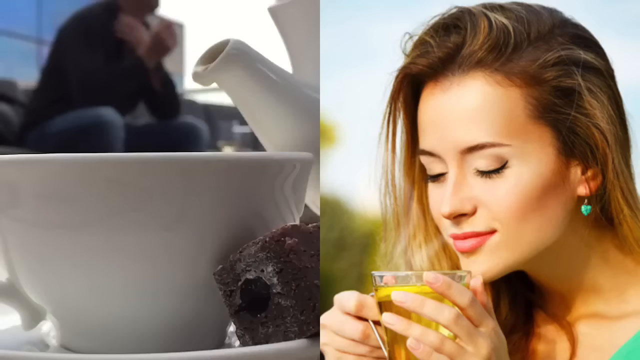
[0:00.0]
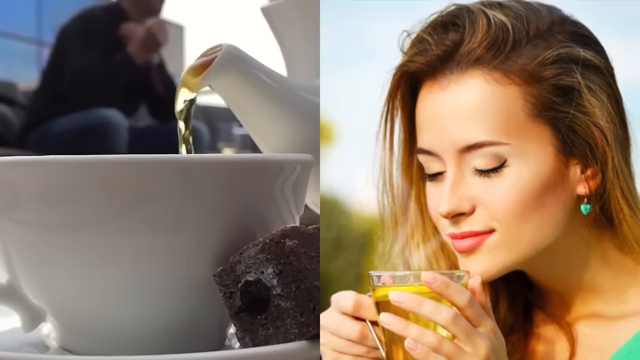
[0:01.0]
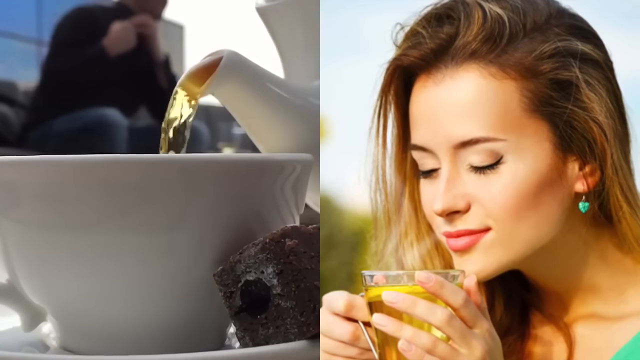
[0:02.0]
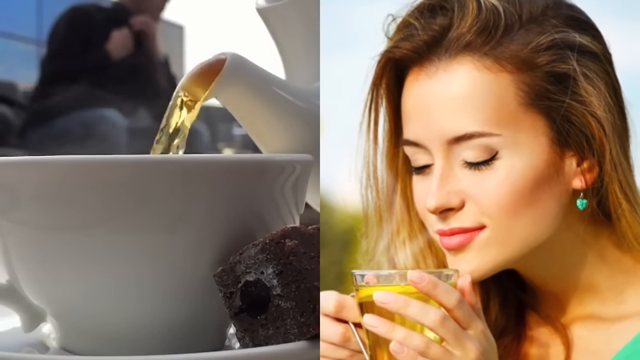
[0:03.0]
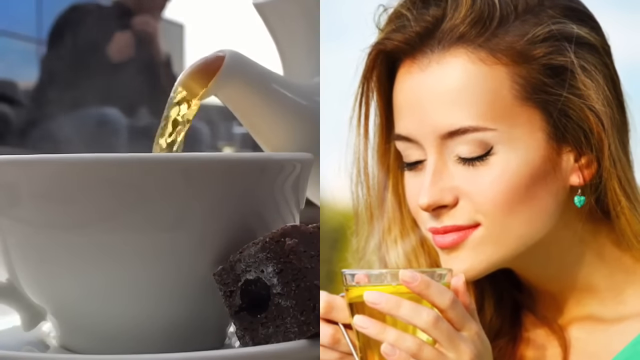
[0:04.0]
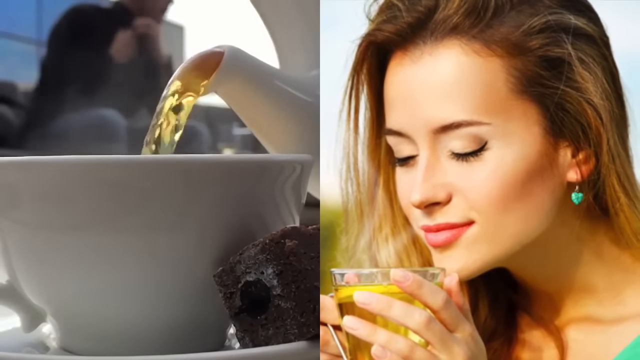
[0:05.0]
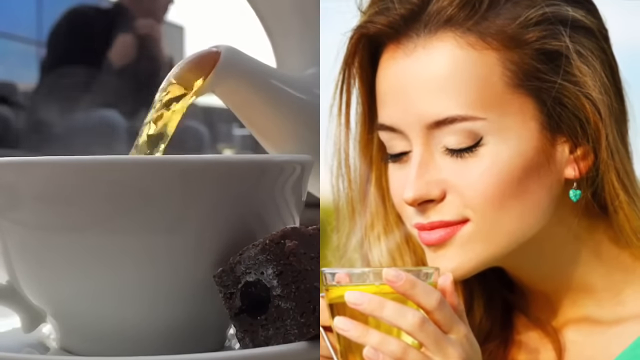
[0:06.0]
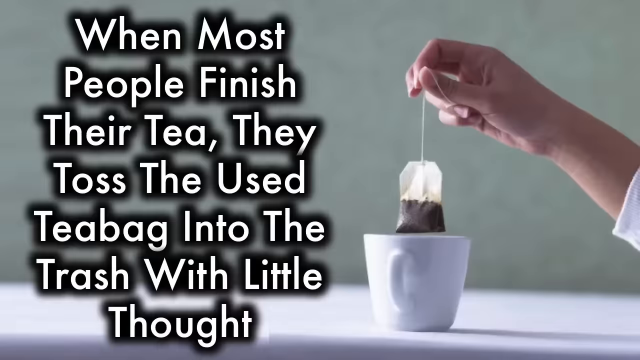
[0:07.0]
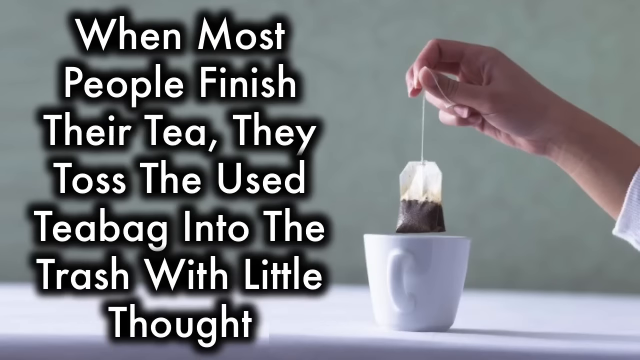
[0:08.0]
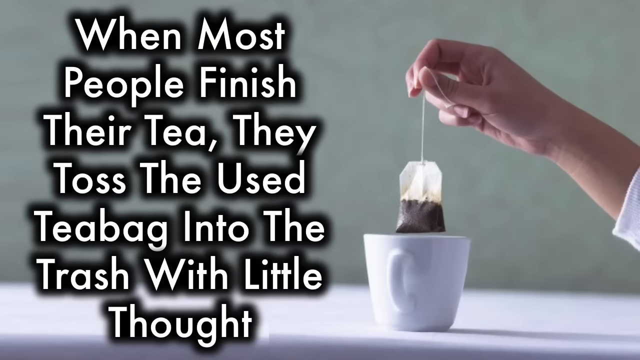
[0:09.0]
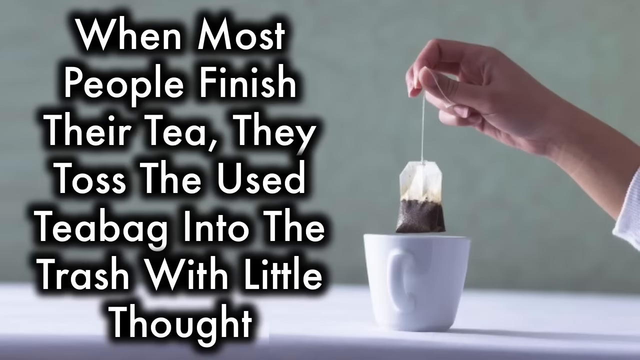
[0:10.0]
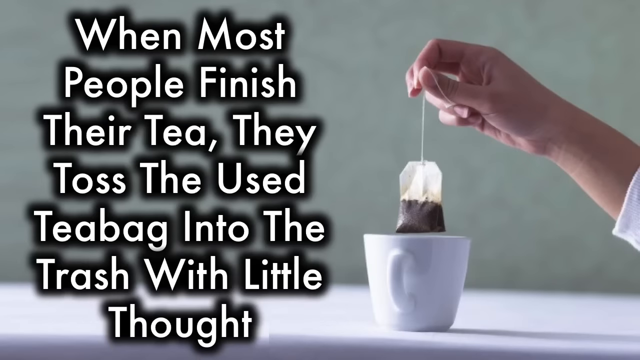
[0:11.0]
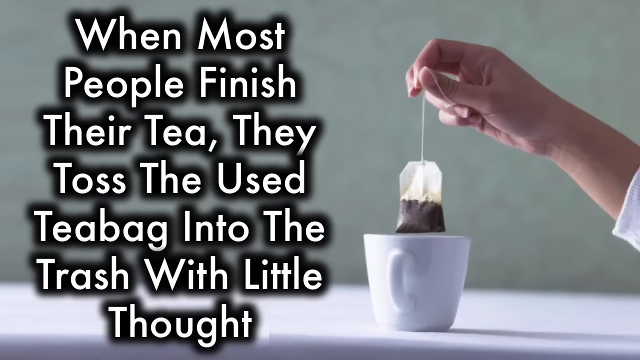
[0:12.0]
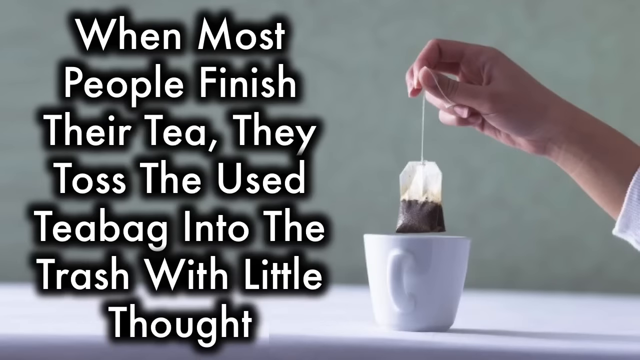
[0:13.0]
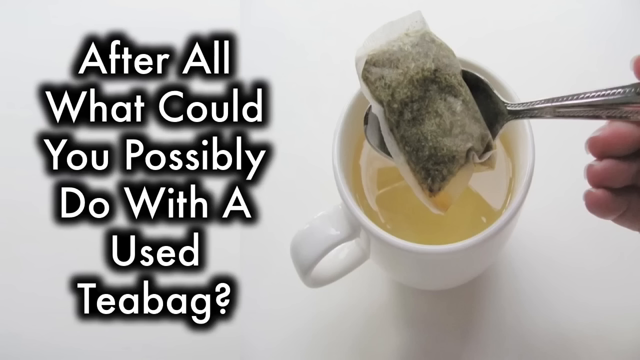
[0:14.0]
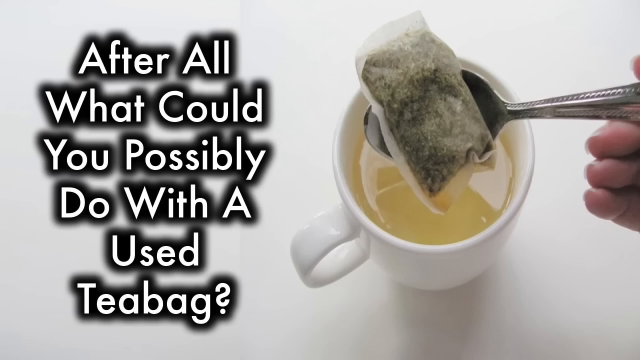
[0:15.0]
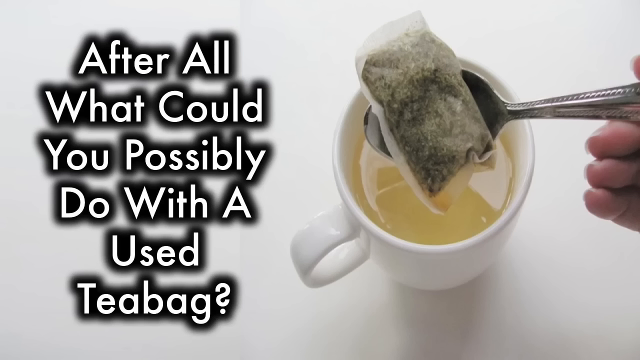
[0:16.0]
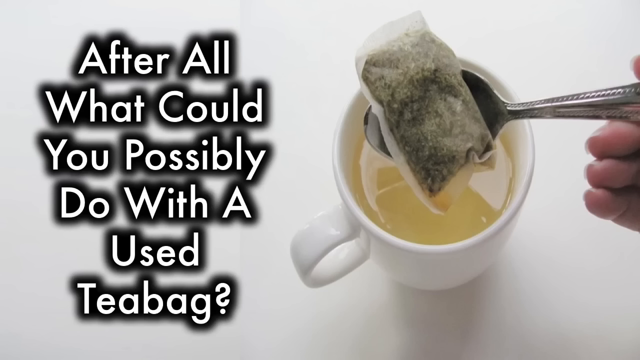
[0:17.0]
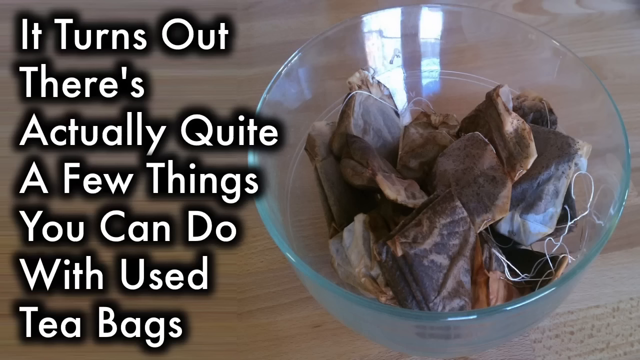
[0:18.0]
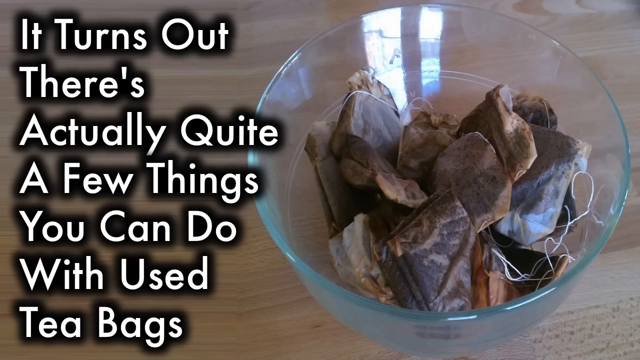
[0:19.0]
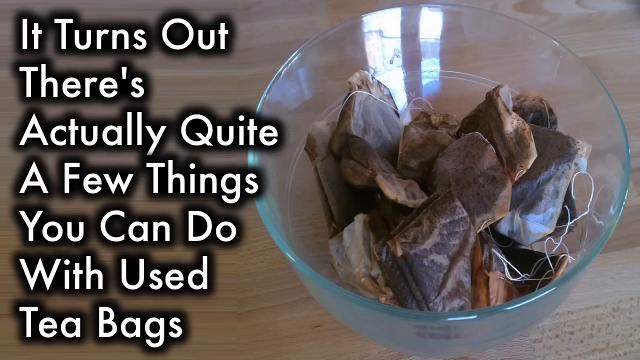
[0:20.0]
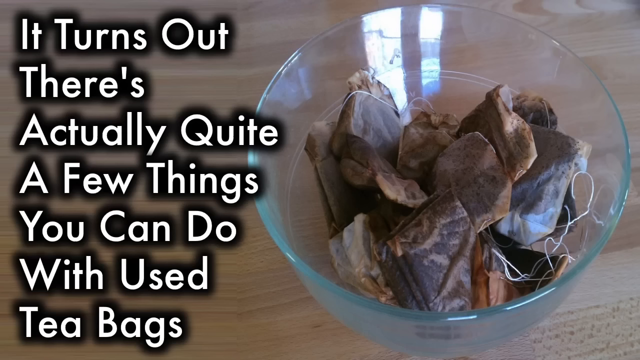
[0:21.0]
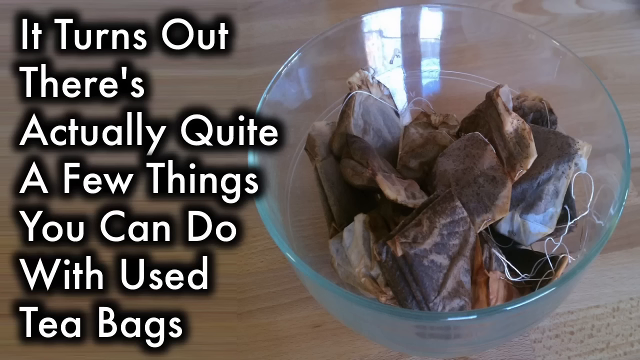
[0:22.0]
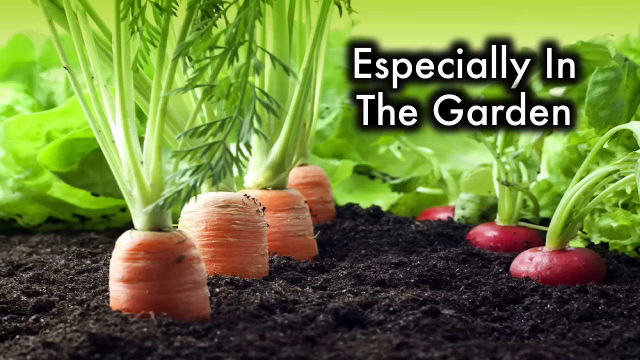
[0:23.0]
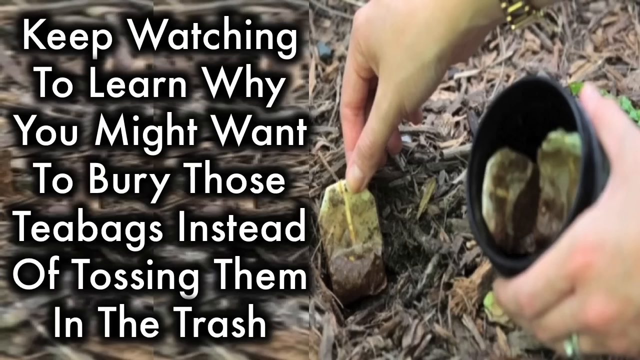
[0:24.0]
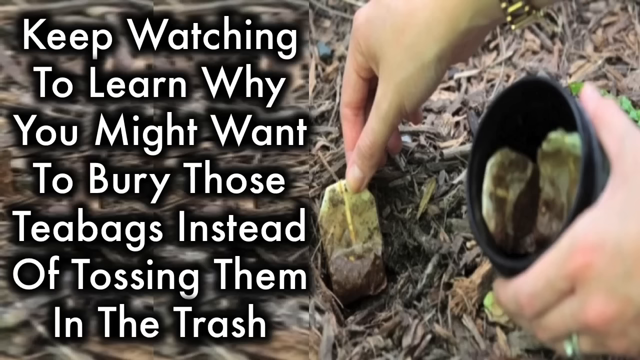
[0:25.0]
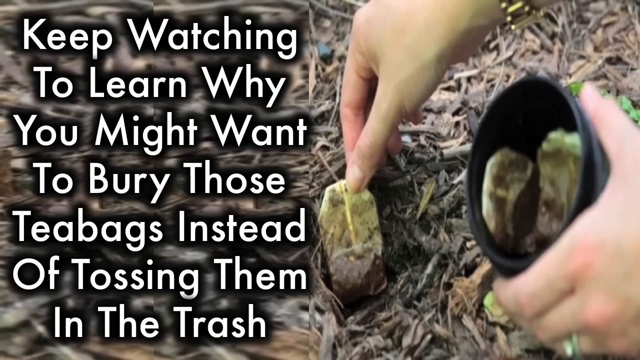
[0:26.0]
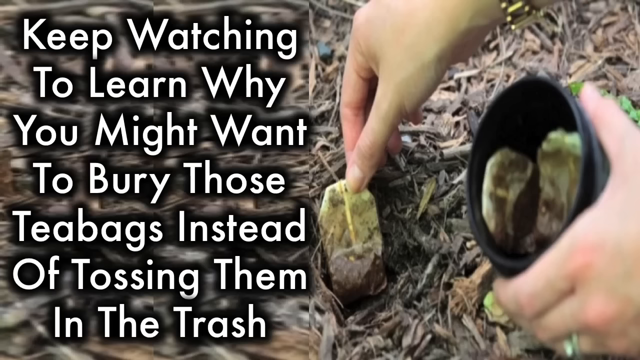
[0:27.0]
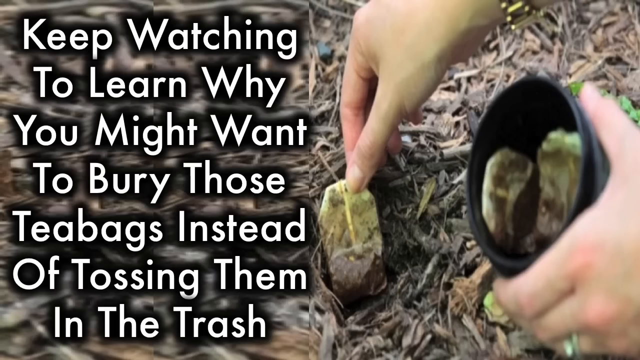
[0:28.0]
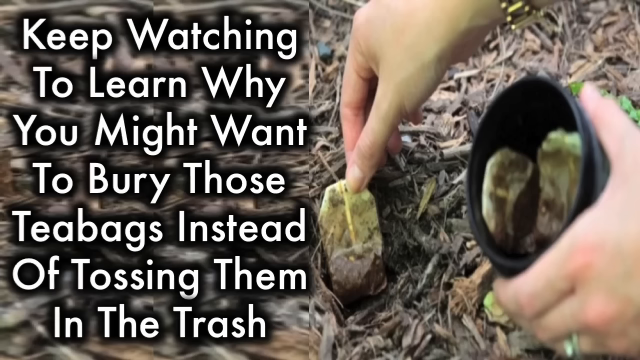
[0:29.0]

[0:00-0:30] A woman with a green earring and a green shirt holds a cup of what appears to be tea. At the side are a white ceramic cup and a white ceramic tea cup, and a man is in the background. Tea pours from the white ceramic tea cup into the cup, with vapour coming out. On-screen text reads: "When most people finish their tea, they toss the used tea back into the trash with little thought. After all, what could you possibly do with a used teabag? It turns out there's actually quite a few things you can do with used teabags, especially in the garden. Keep watching to learn why you might want to bury those teabags instead of tossing them in the trash." The video apparently sets out to explain other uses for used tea bags instead of throwing them away.